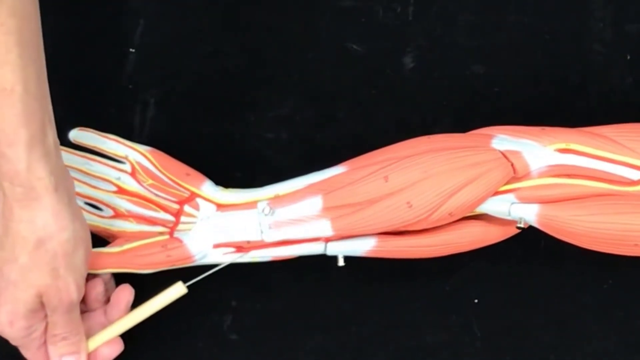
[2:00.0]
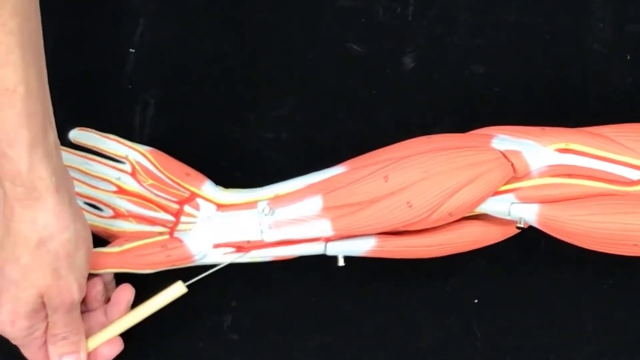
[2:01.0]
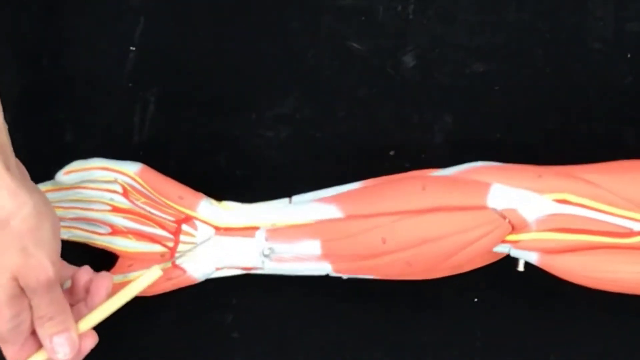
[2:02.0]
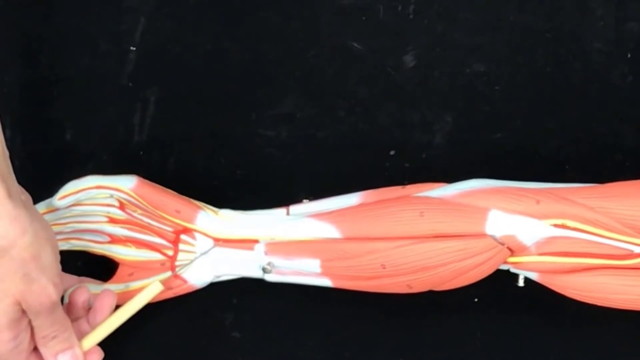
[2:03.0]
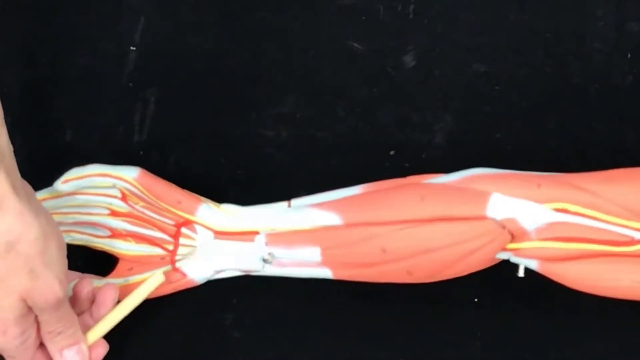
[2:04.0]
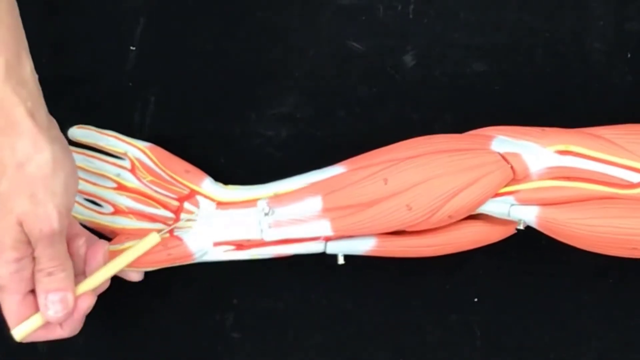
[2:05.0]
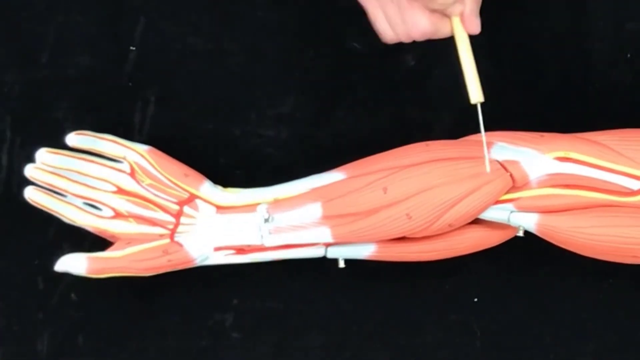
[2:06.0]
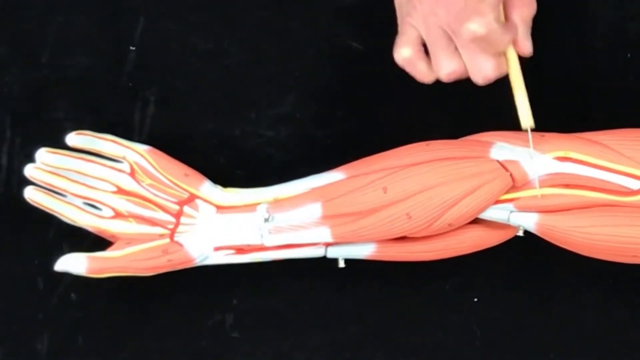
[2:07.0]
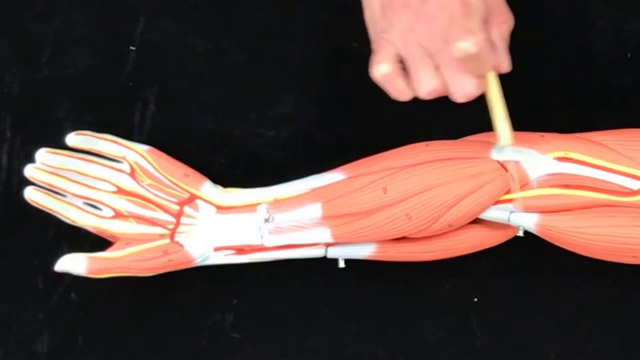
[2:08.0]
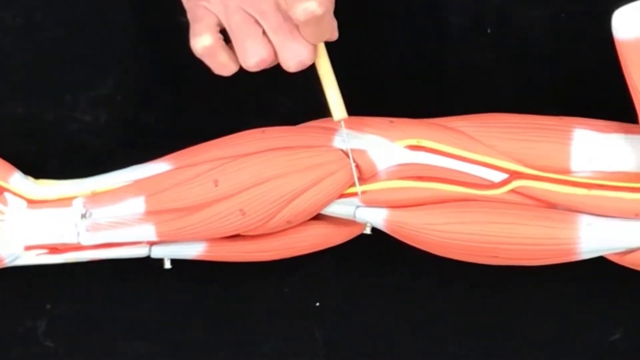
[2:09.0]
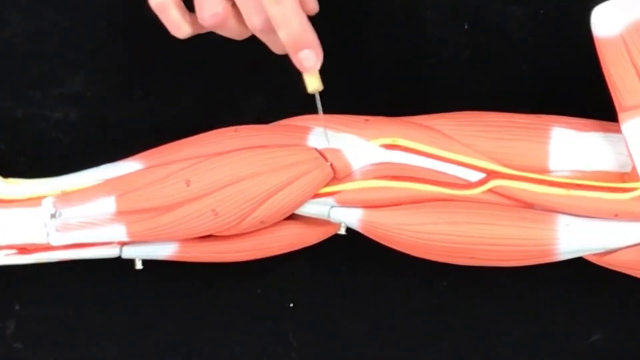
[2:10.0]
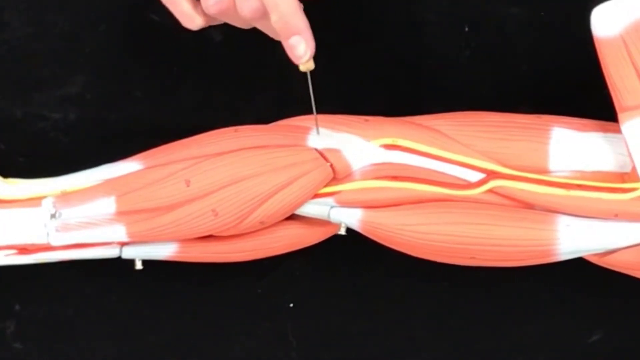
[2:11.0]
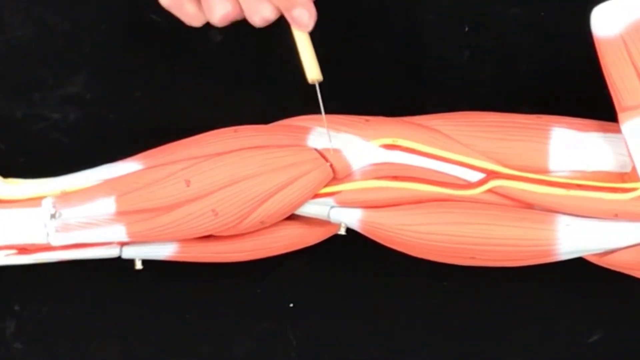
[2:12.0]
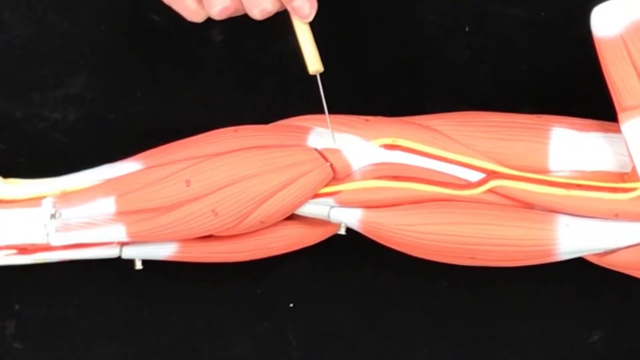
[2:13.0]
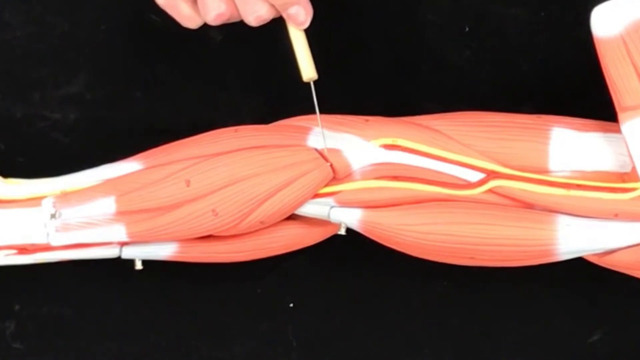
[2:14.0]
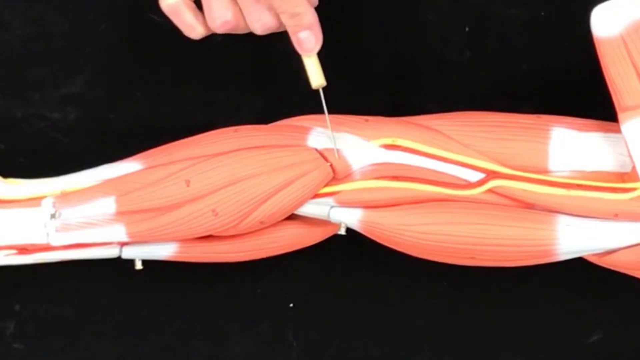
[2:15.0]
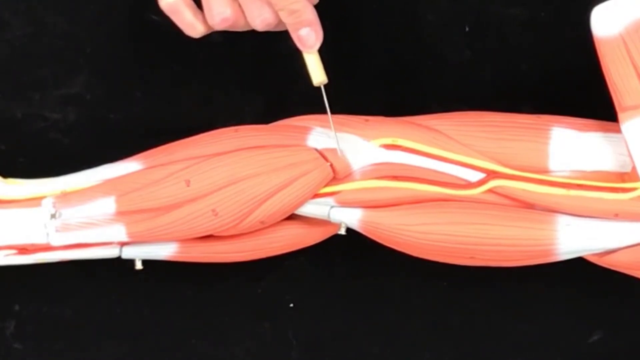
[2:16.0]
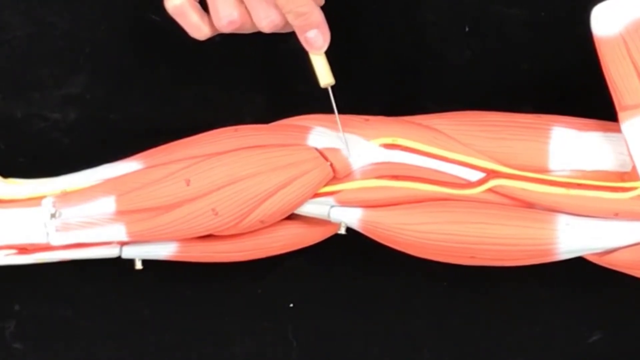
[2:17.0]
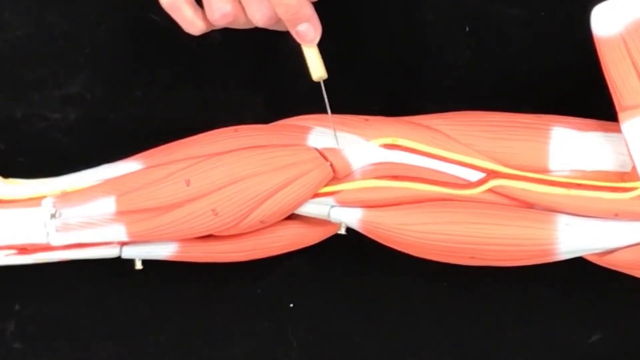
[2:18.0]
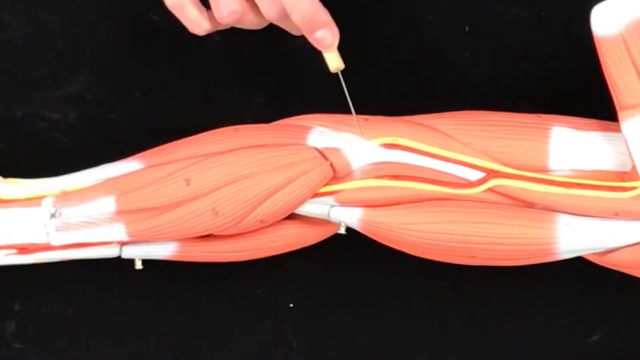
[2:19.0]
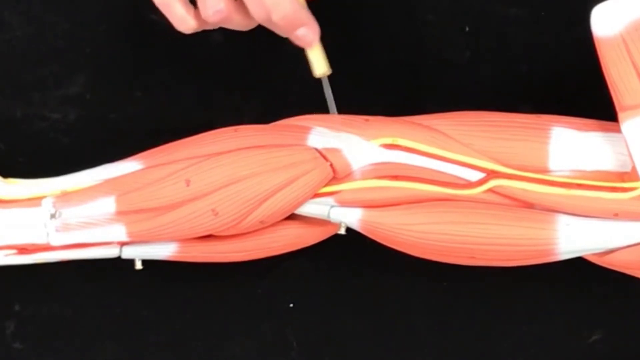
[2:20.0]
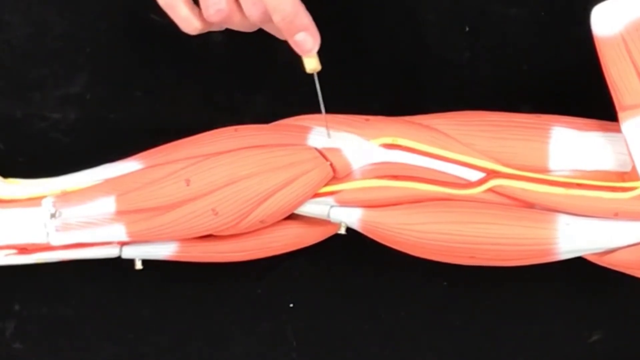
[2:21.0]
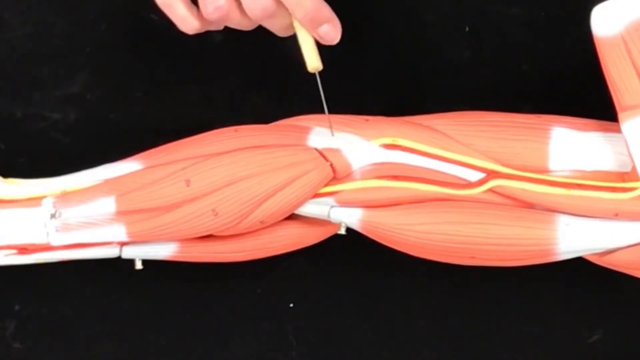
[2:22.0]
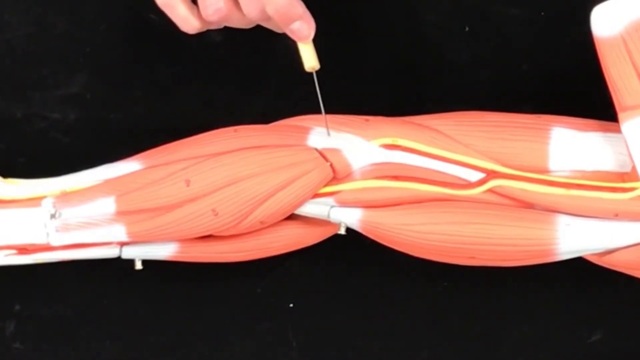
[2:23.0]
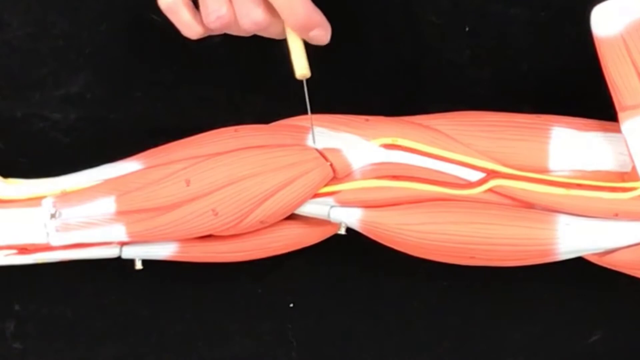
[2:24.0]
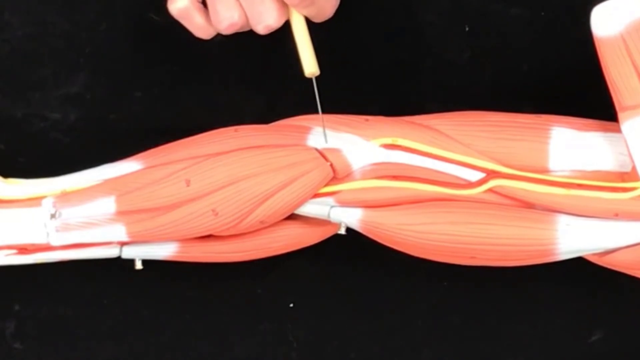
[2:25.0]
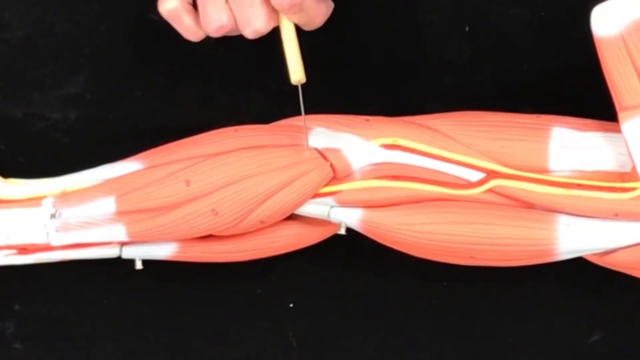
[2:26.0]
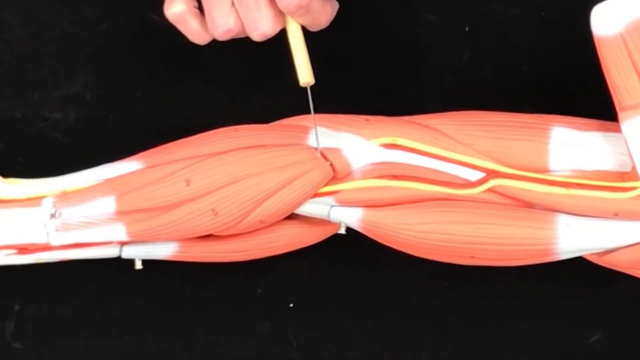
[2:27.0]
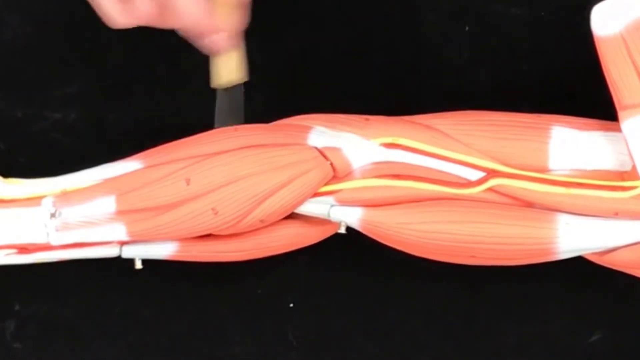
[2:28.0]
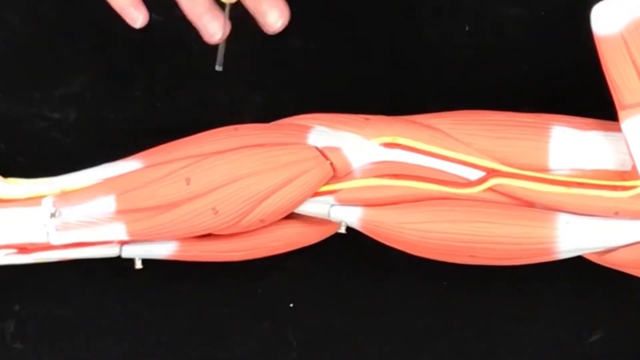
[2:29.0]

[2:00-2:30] With the pointer on the second artery, which comes out from the wrist and runs down the outside of the hand to the end of the pinky, she brings the pointer back up, tilts the model, and moves the pointer in a circular motion on the inside of the elbow. She then rolls the model slightly and points, making a couple of small circles at places on the outside top of the elbow, at the ligaments or tendons. She moves the pointer back and forth over the central section where the artery would go down into the lower arm, perhaps showing how the artery runs down the outer side of the lower arm into the pinky. She then tucks the pointer into her hand and points with her fingers, gesturing from the elbow area down toward the hand.